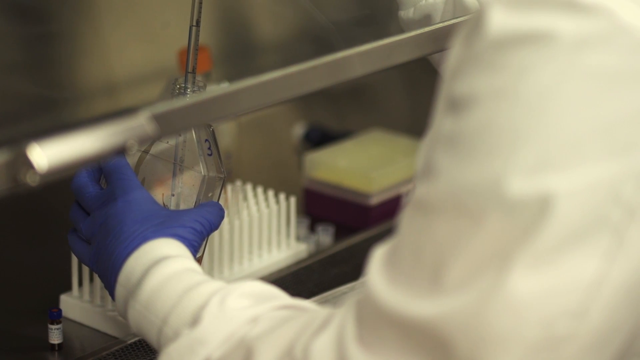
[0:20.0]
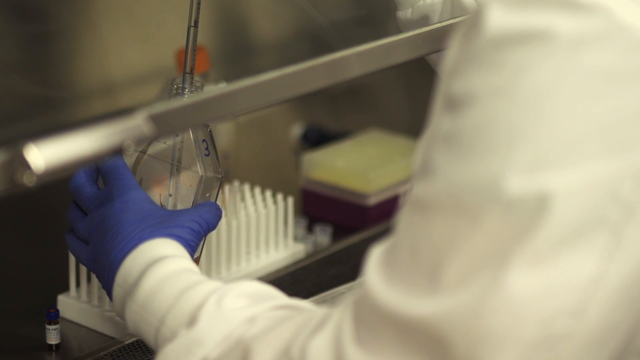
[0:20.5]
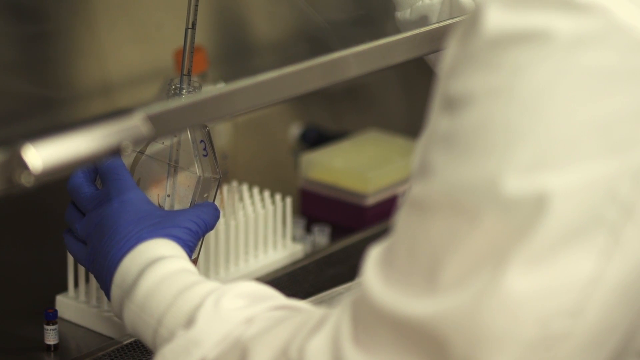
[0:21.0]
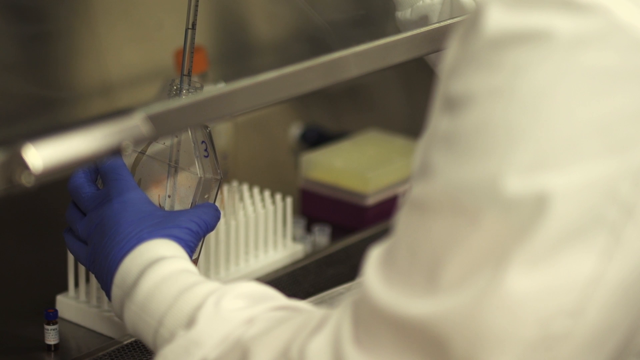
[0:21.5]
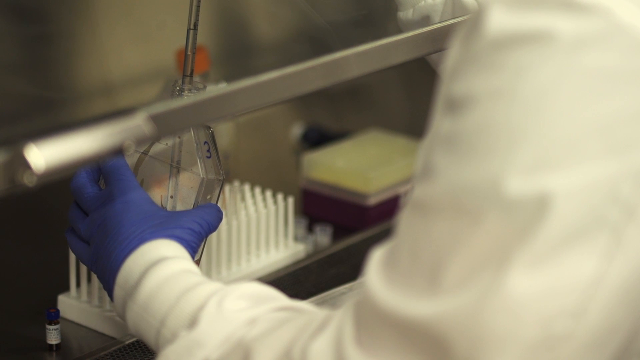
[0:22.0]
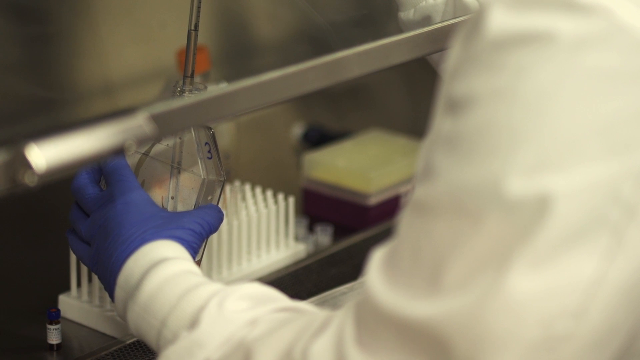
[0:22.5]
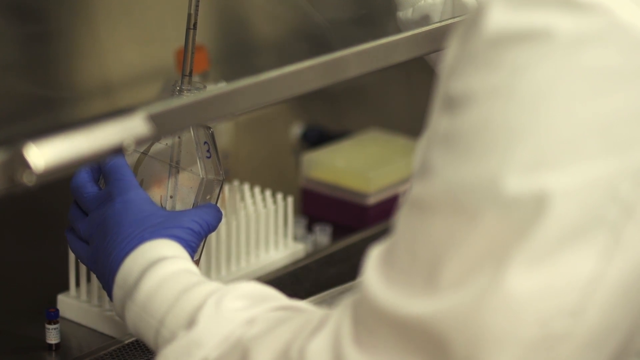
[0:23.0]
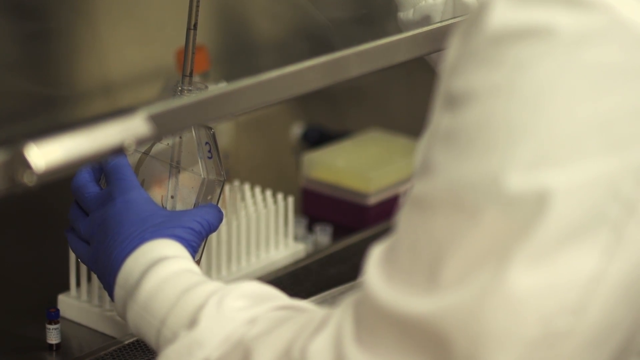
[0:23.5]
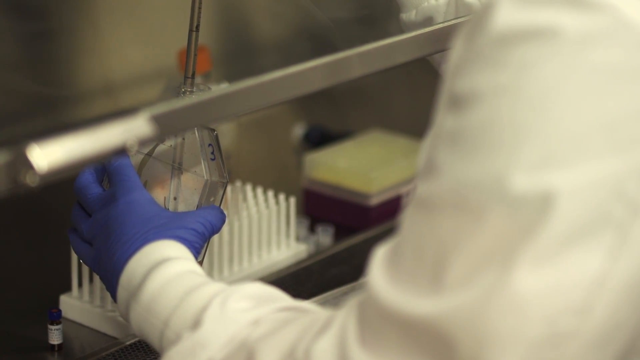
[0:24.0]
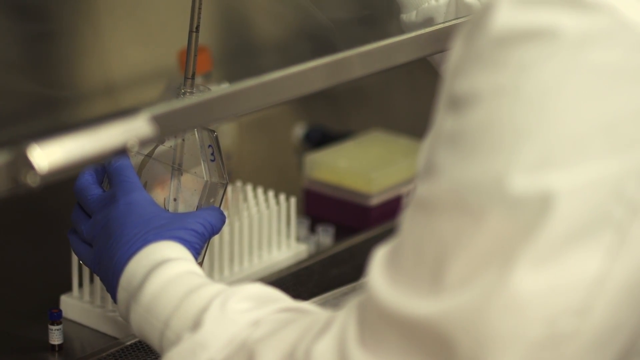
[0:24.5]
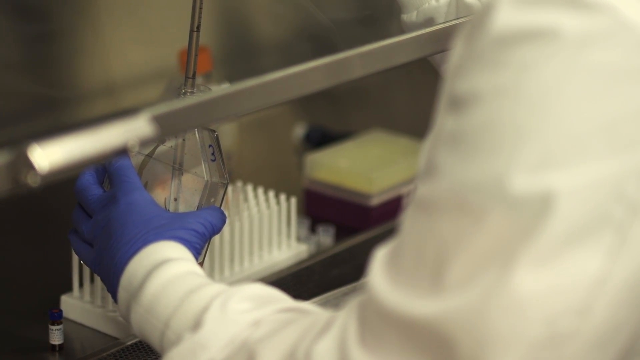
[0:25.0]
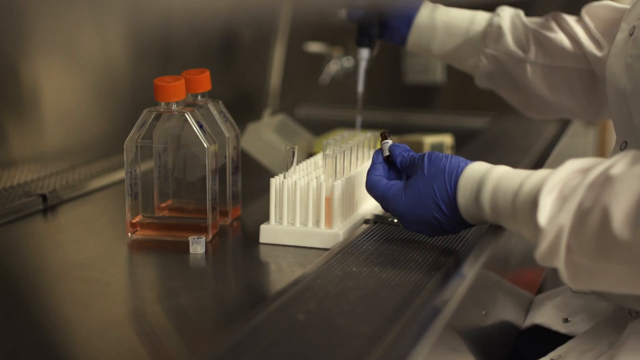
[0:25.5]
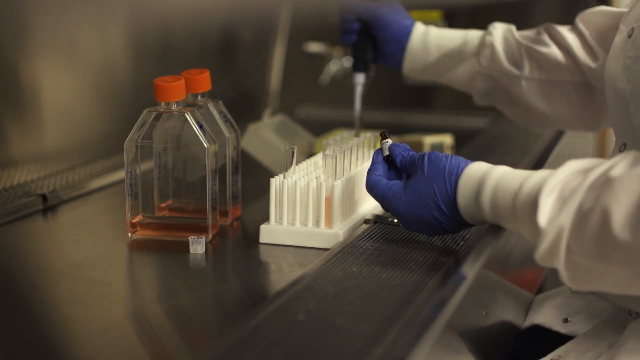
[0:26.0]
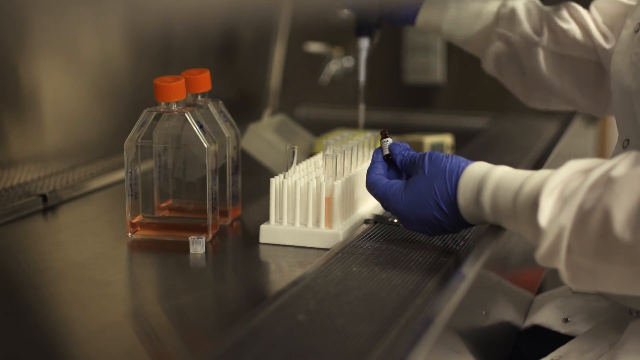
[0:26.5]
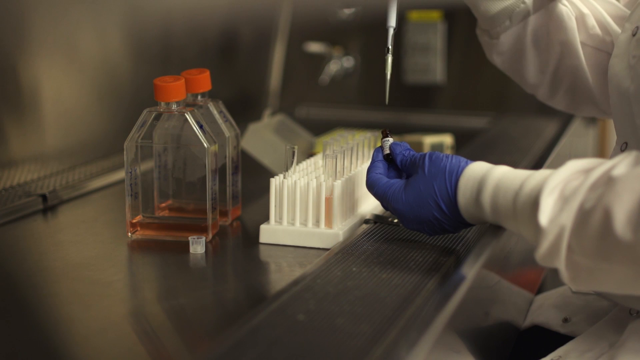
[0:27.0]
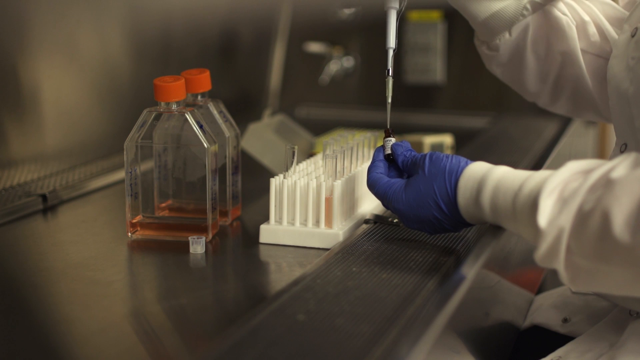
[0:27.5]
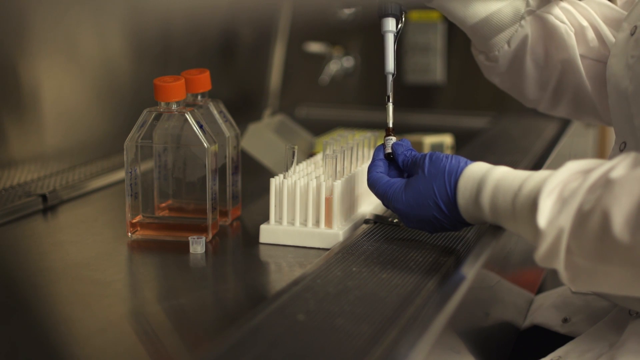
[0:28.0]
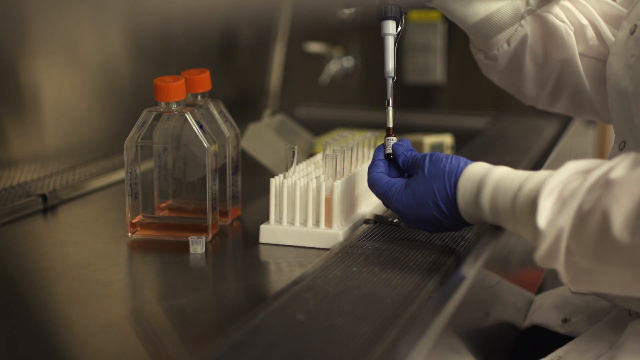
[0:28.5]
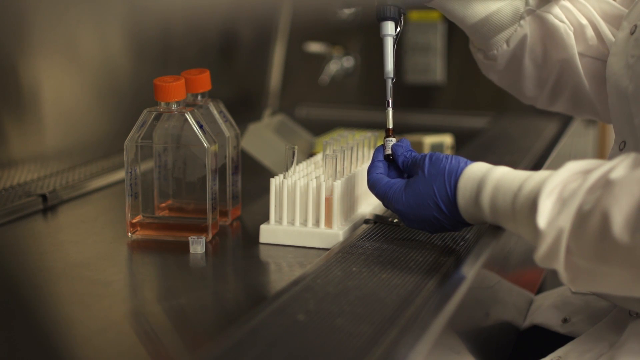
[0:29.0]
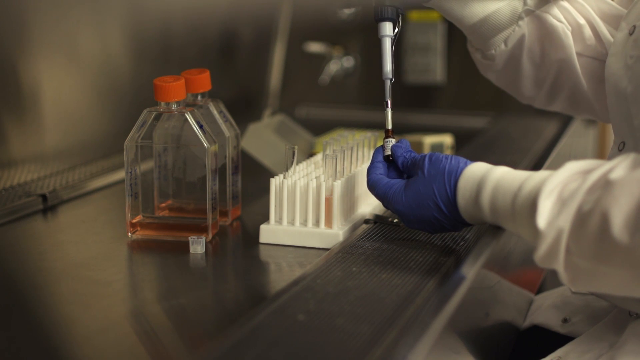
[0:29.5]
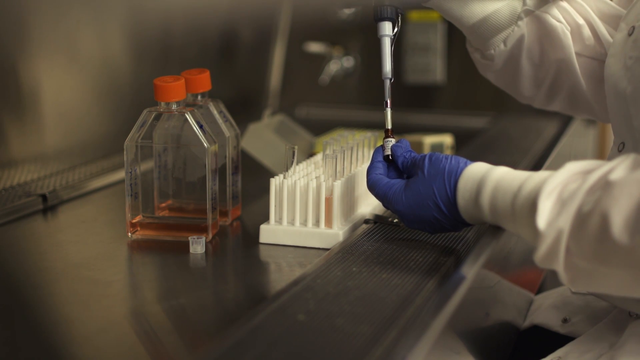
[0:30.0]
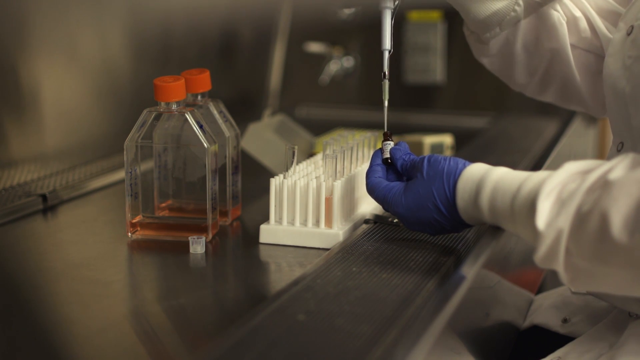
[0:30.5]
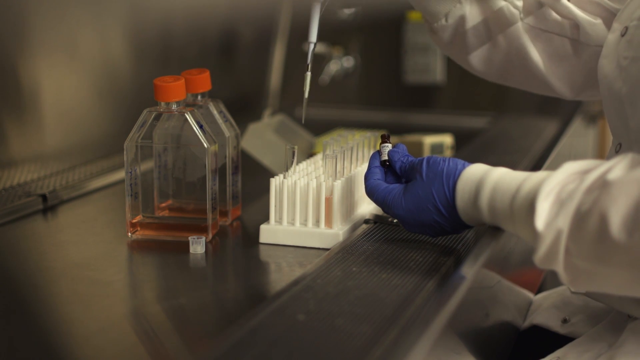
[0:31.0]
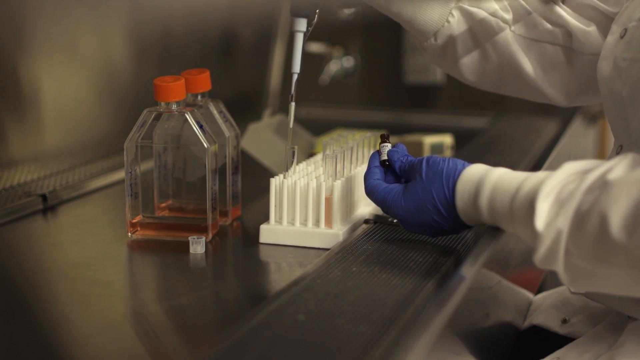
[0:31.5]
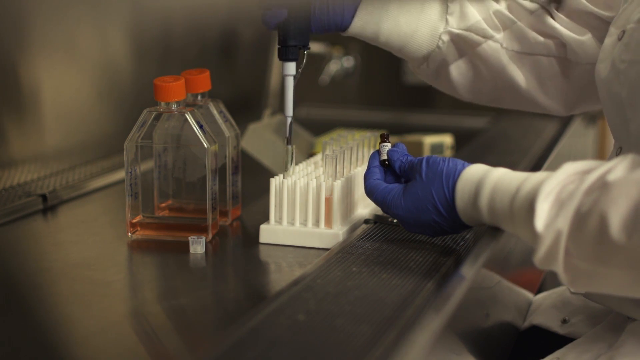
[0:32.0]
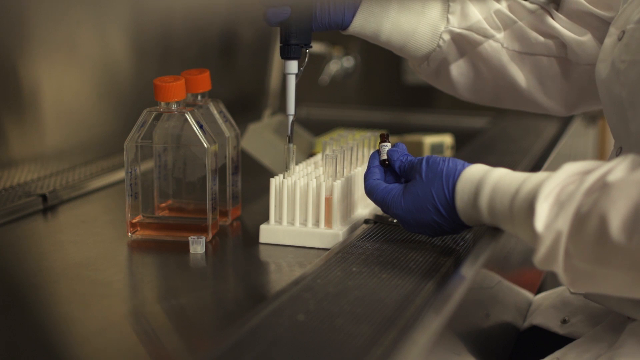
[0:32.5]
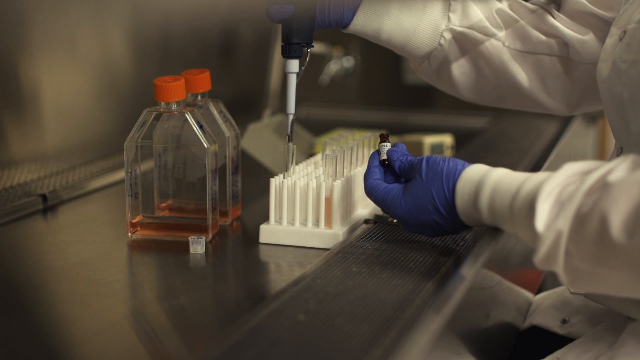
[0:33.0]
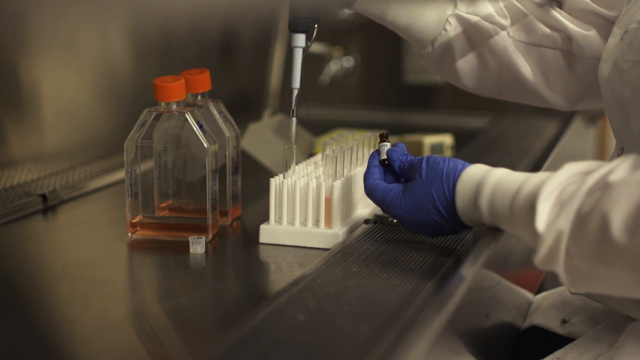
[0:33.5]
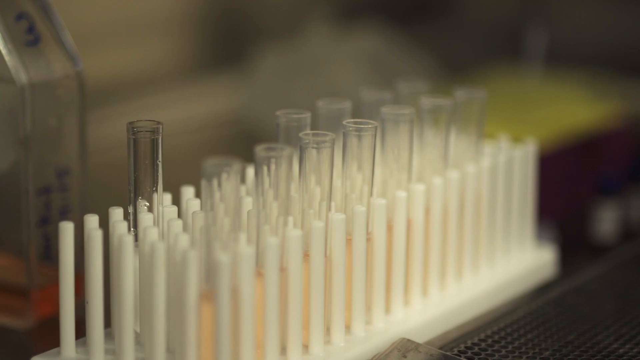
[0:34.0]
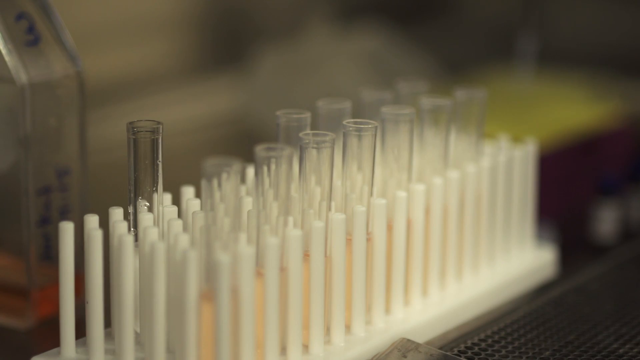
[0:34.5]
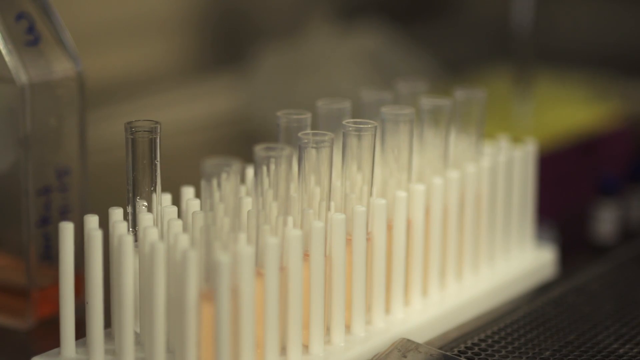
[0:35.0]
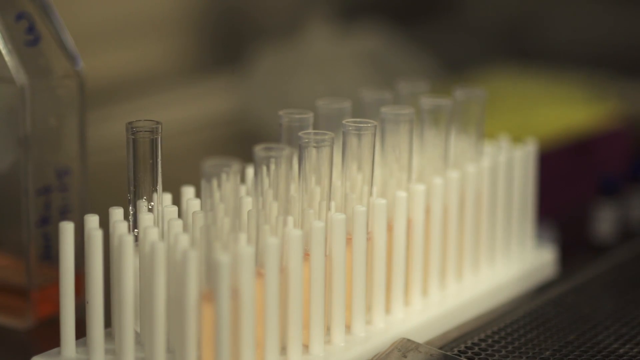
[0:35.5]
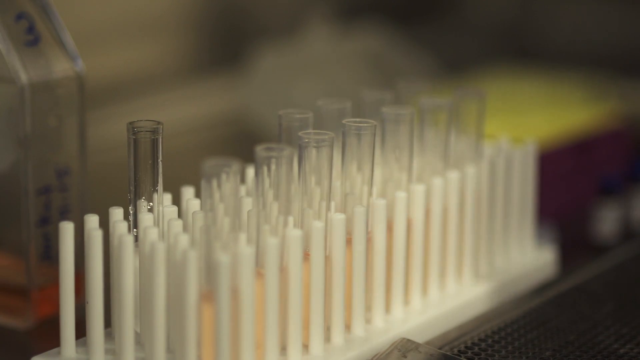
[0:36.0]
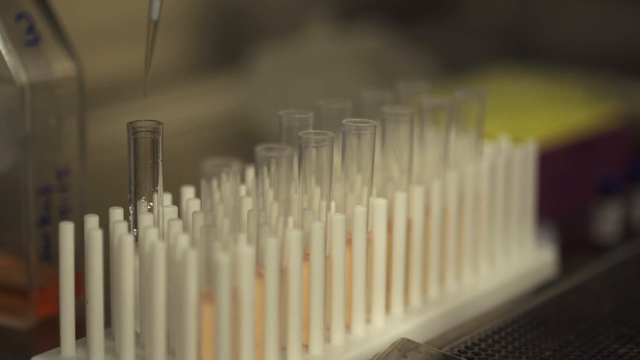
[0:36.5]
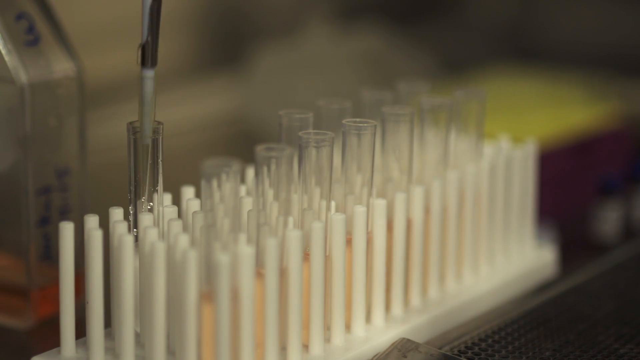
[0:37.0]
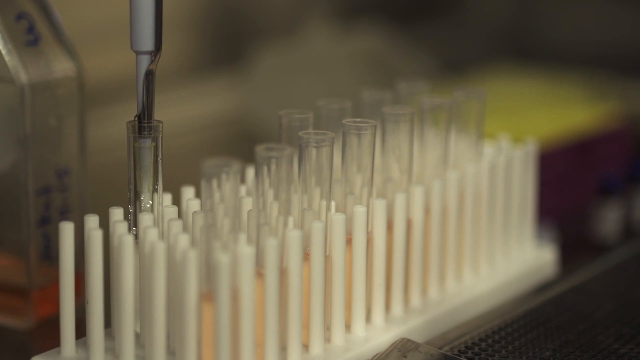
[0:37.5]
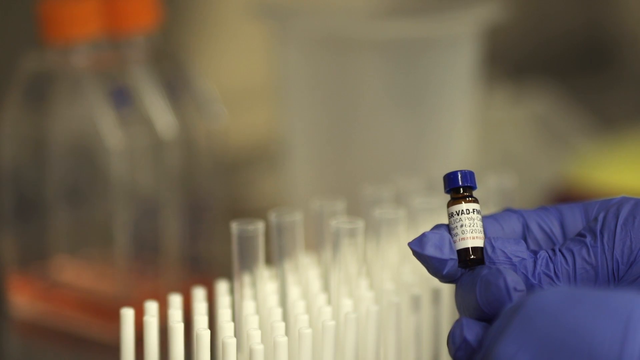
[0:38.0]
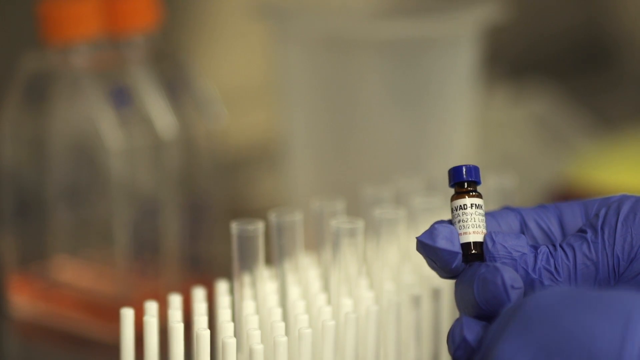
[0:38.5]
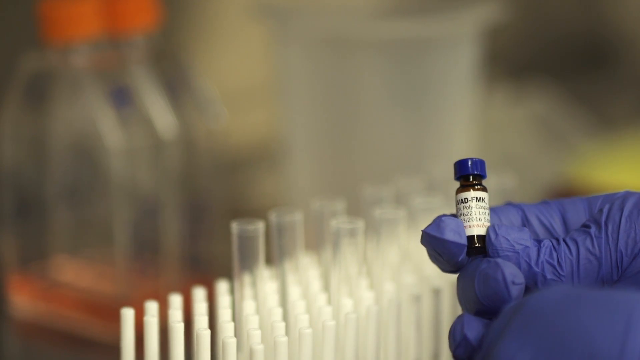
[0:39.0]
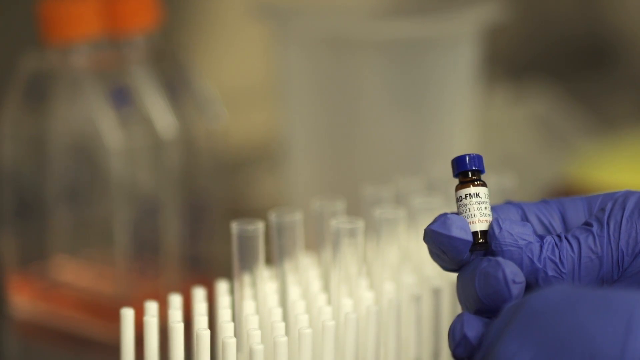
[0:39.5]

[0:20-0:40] A person in a lab fills vials with a liquid, using a plunger to pull the liquid from little test tubes and then using the handheld plunger to fill small brown vials. The filled vials look like the final product: a dark brown vial with a white sticker bearing text, and a blue cap on top. The text is very small and hard to read. A blue cap is screwed onto the top of a dark brown vial.